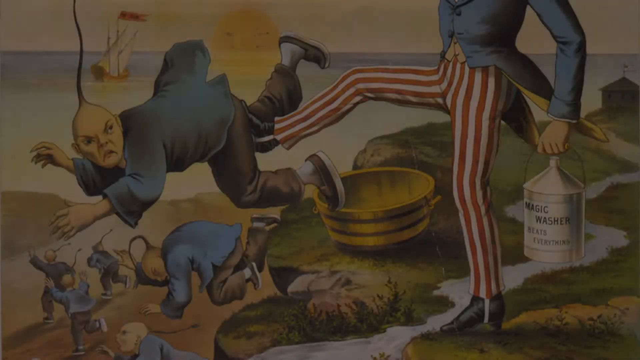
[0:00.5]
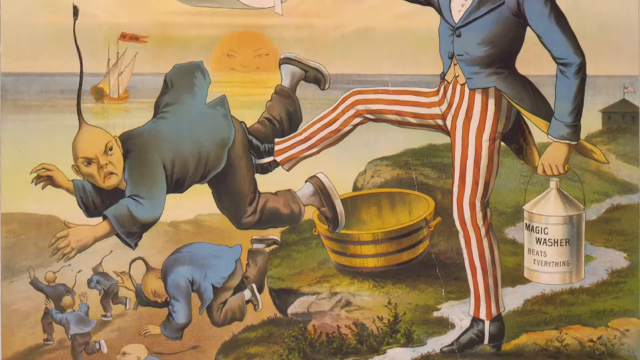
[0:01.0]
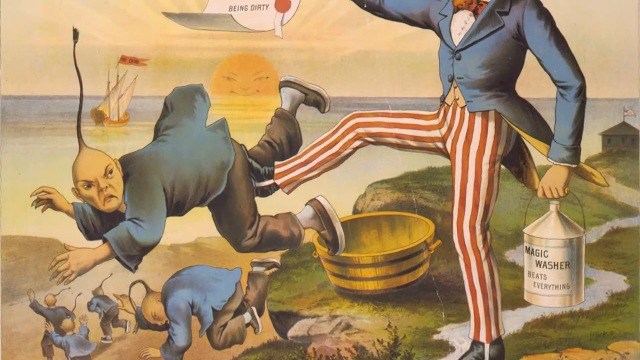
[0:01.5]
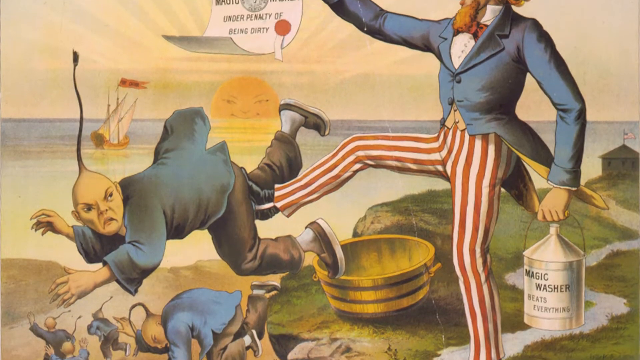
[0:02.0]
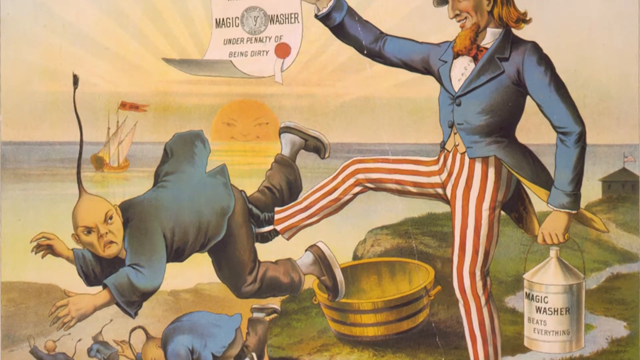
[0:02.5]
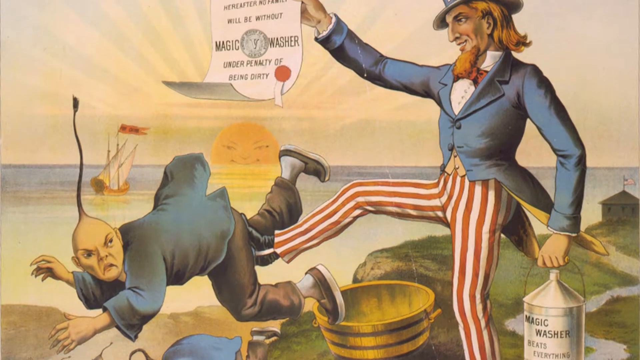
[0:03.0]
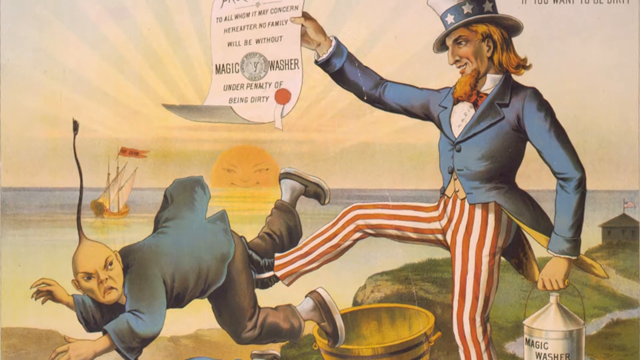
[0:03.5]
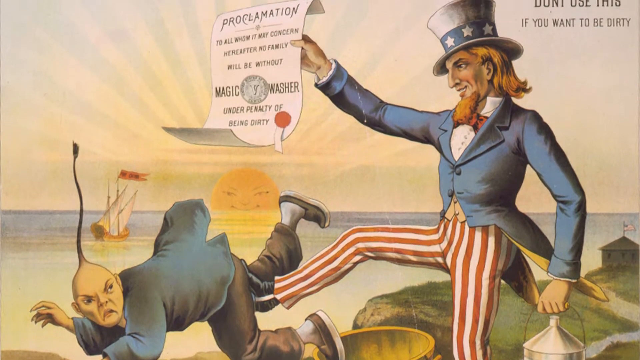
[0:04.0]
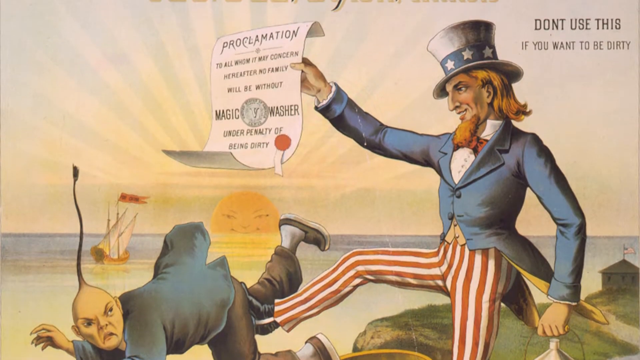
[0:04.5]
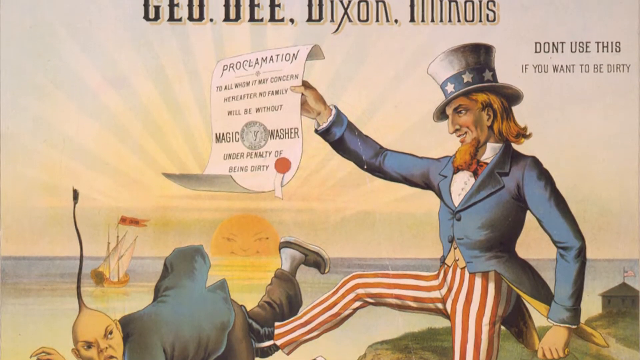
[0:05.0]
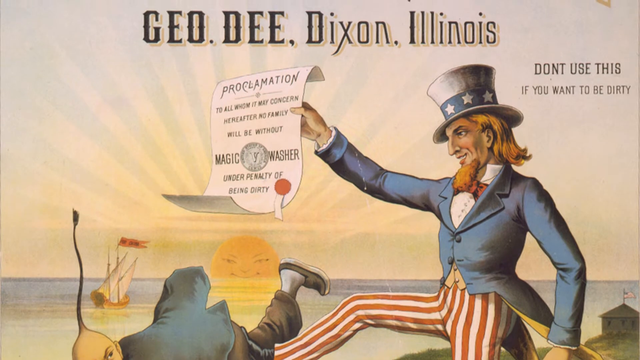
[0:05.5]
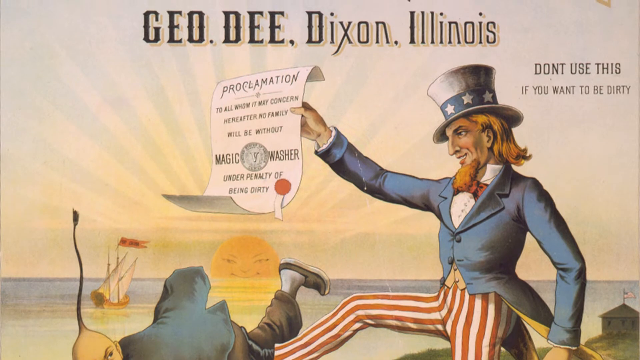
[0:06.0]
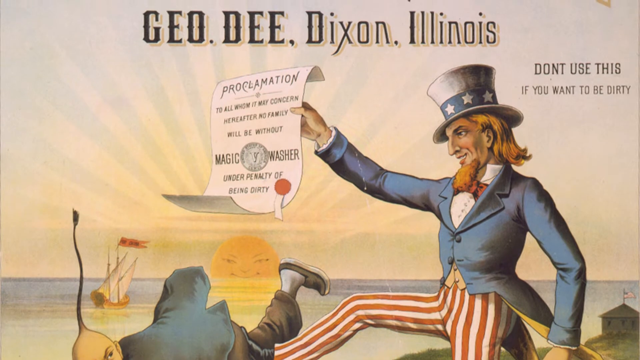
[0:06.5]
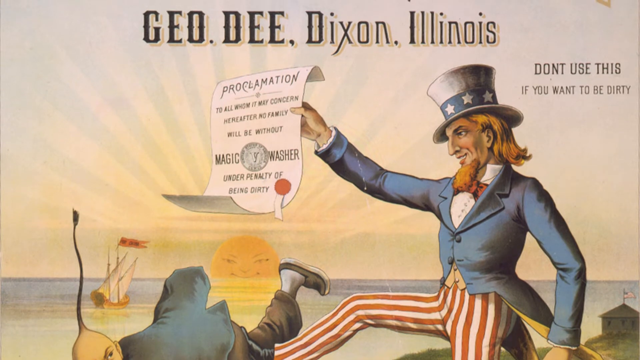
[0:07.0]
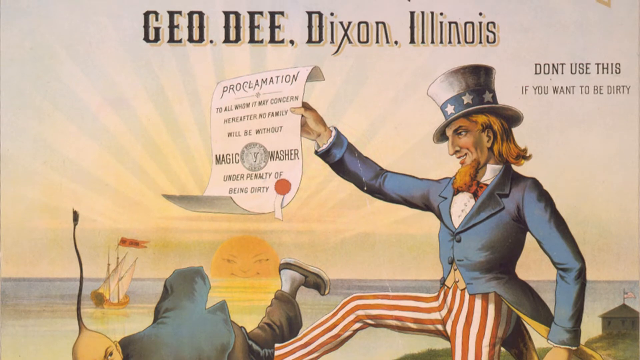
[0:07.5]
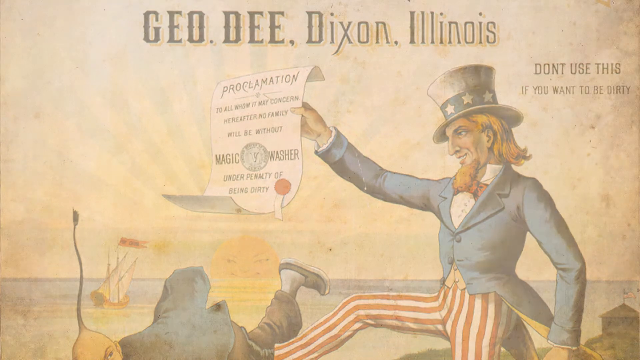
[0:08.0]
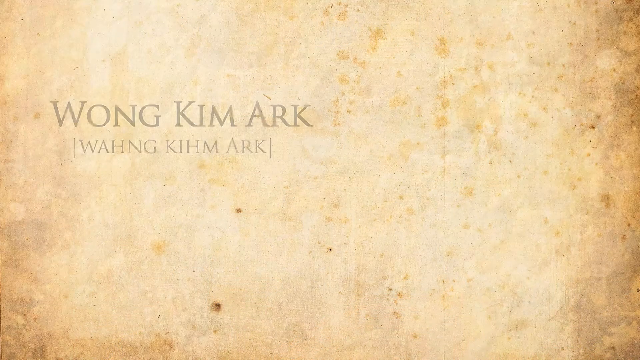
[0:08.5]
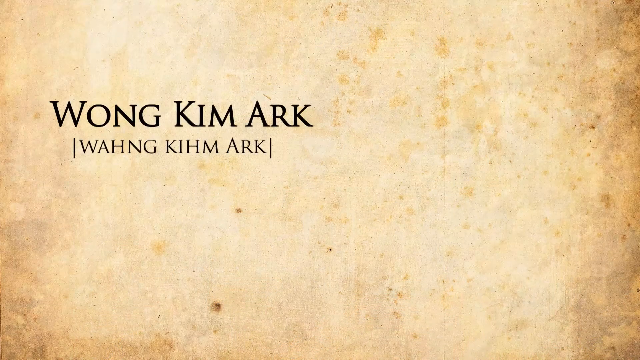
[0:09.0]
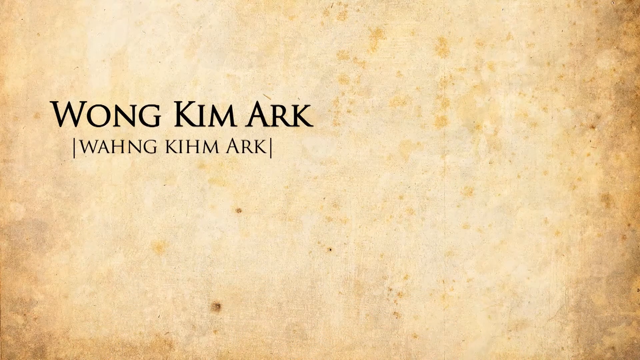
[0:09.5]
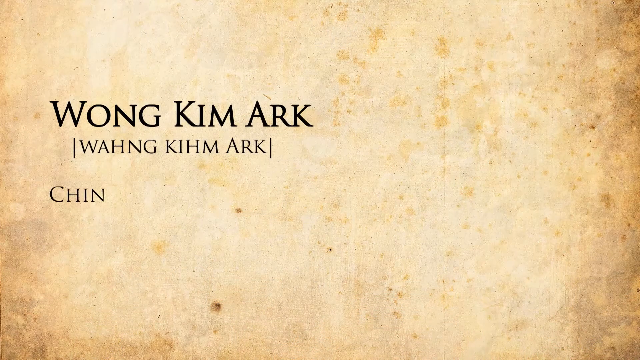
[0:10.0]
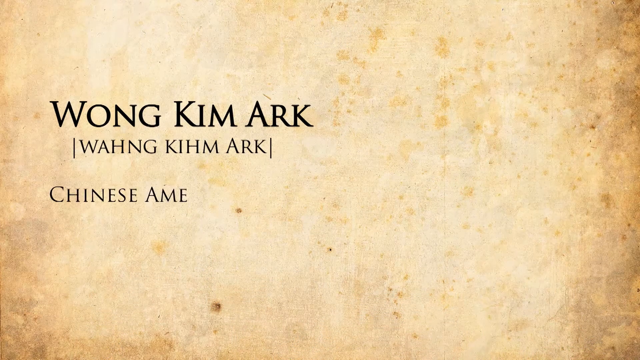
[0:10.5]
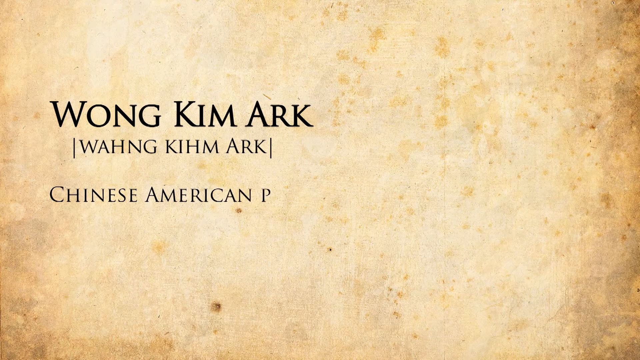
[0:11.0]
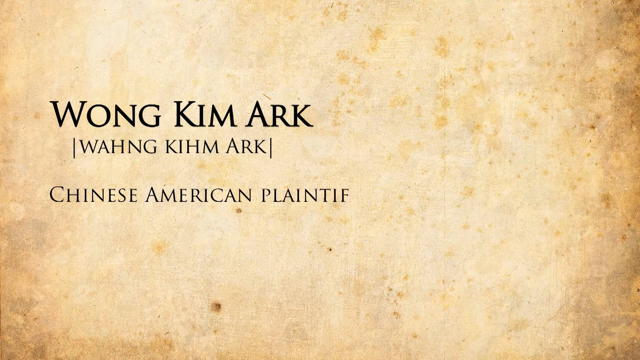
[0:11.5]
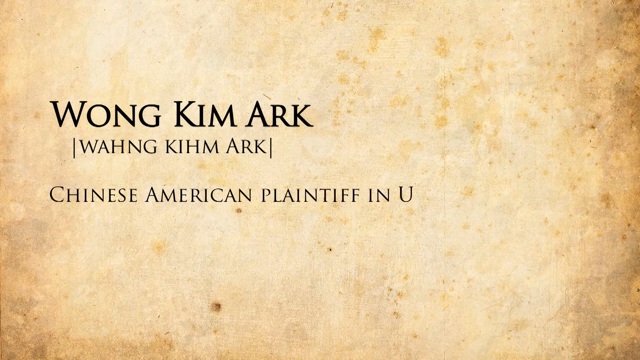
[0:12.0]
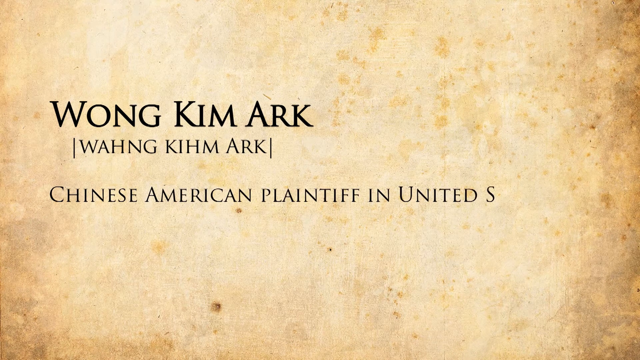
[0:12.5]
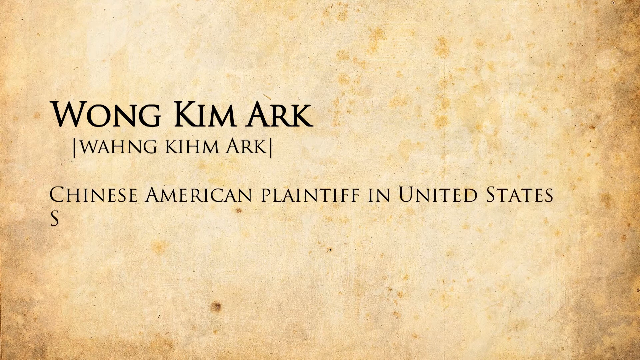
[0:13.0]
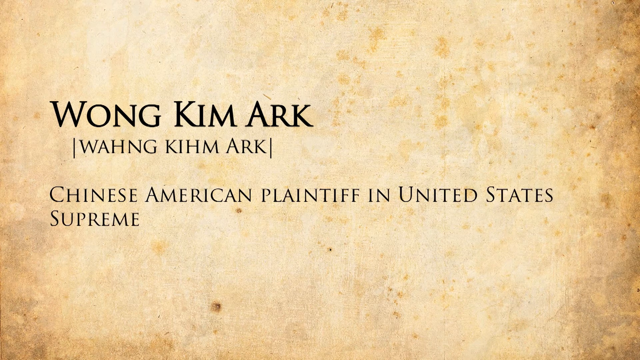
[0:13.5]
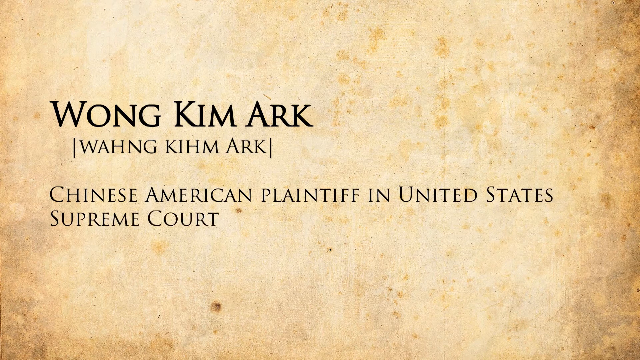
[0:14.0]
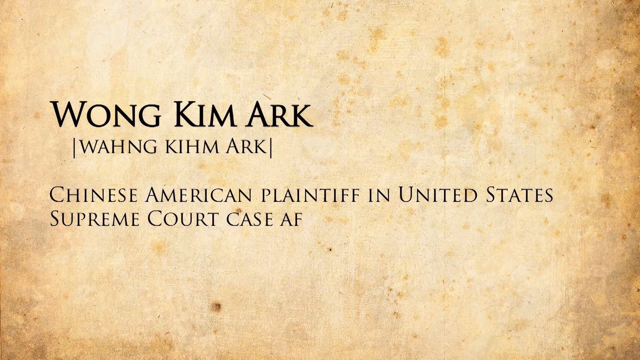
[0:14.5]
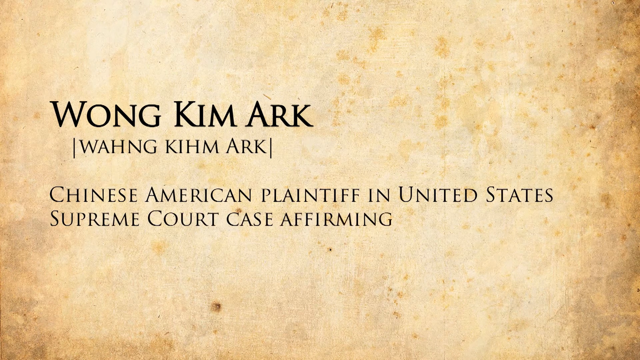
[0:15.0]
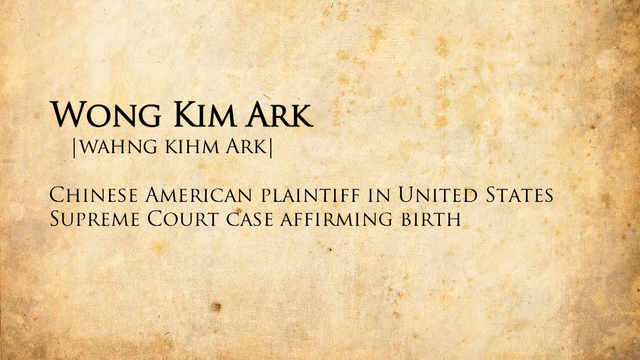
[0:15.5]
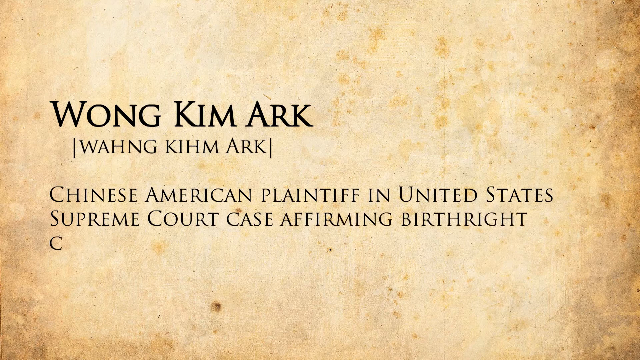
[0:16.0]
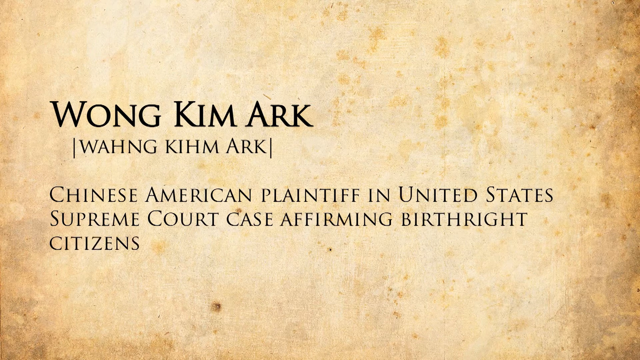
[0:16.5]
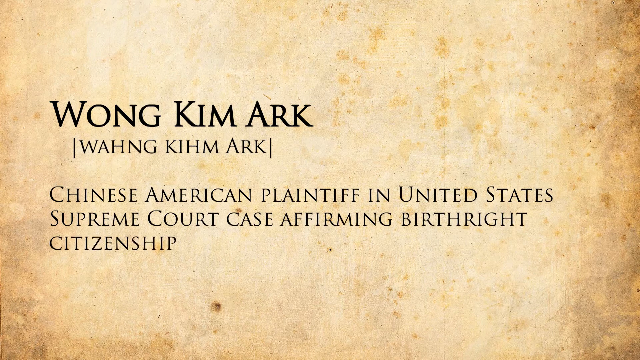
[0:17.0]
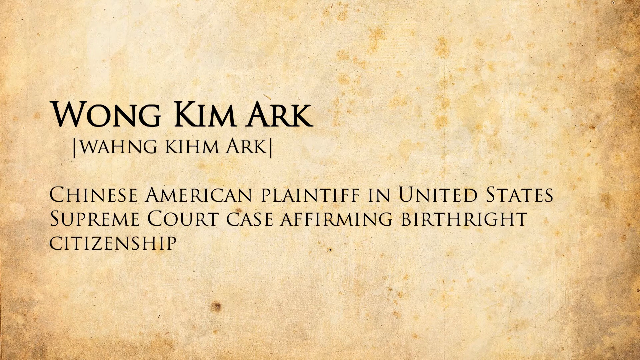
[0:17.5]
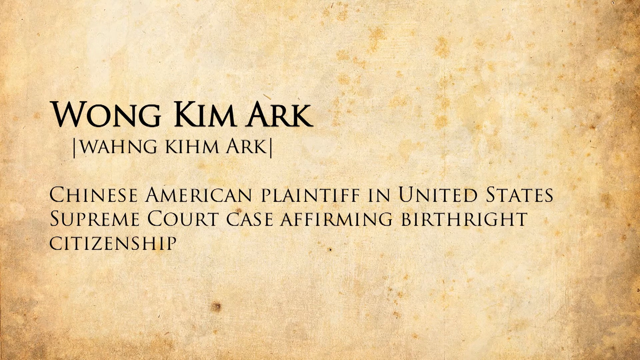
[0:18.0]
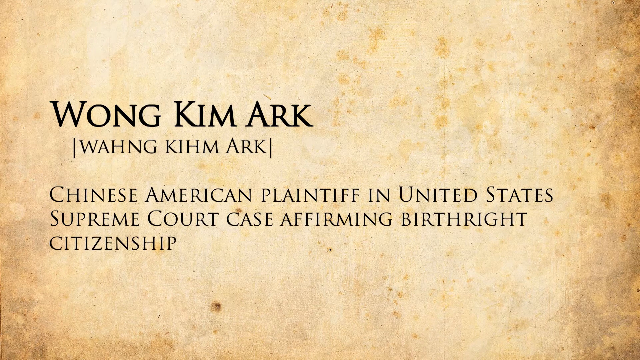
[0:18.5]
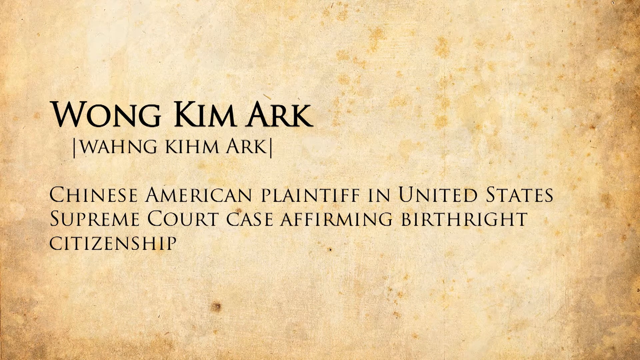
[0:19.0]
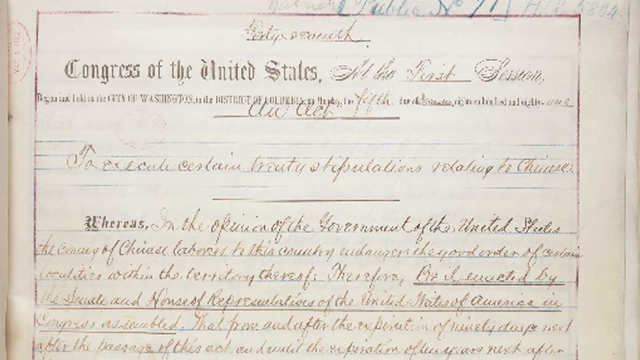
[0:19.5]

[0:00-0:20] What appears to be an old, racist illustration seems to show Uncle Sam kicking an Asian man in the rear, sending him flying into the air. Uncle Sam holds a document with a seal on it that reads "magic washer under penalty of being dirty," and in his other hand he holds a magic washer type of canister with a handle. In the background is a sun with a smiley face and slanted eyes, over an ocean. On the ocean is a ship with white sails and a red flag flying over it. At the very top of the illustration is the text "G.E.O.D. Dixon, Illinois," and at the top right, in black text, it says "don't use this if you want to be dirty." The view then switches to more text on a background that looks like old parchment, reading "Wong Kim Ark."